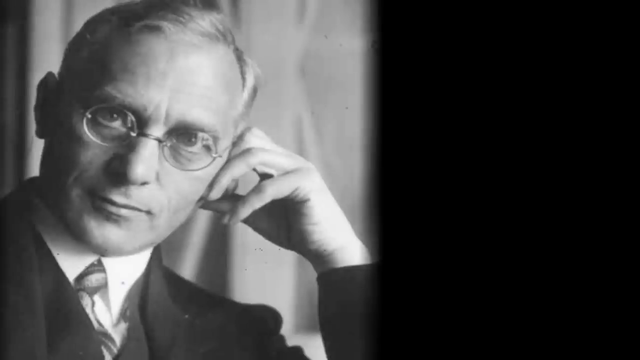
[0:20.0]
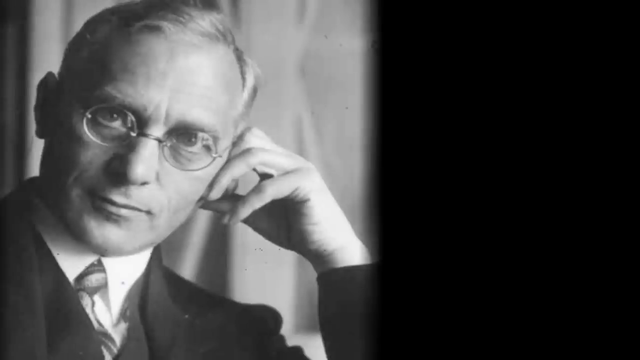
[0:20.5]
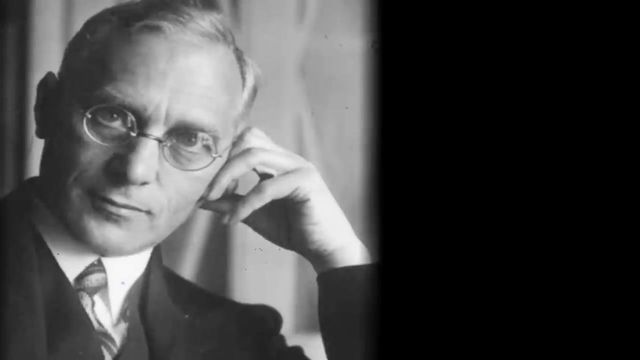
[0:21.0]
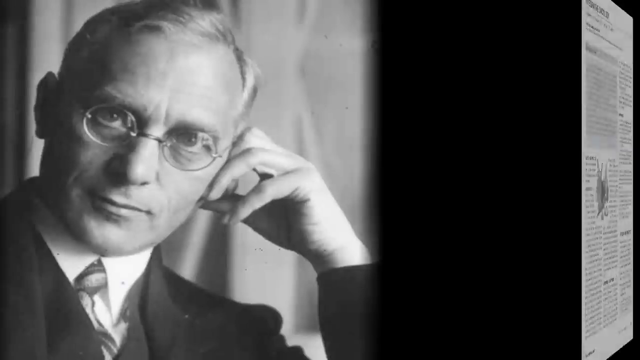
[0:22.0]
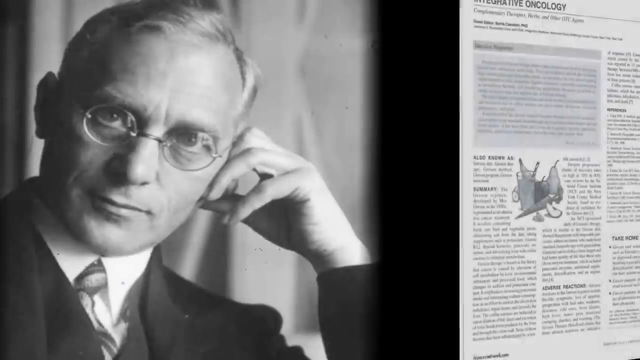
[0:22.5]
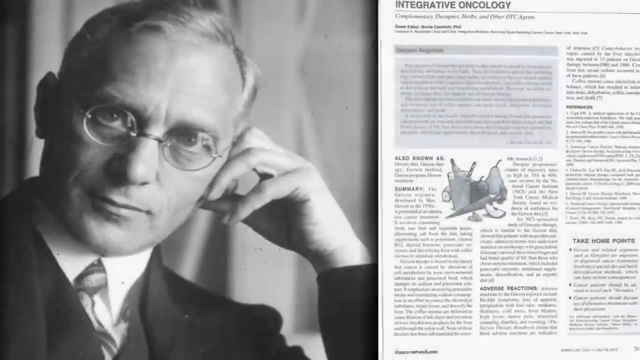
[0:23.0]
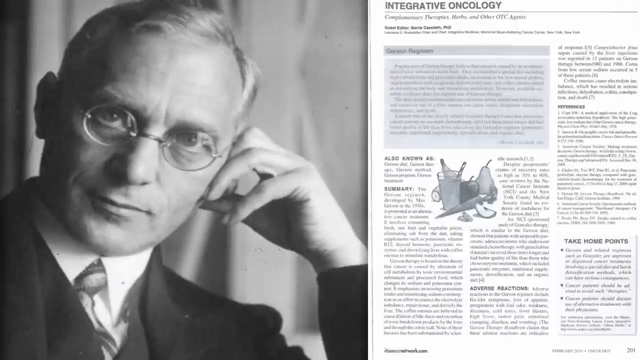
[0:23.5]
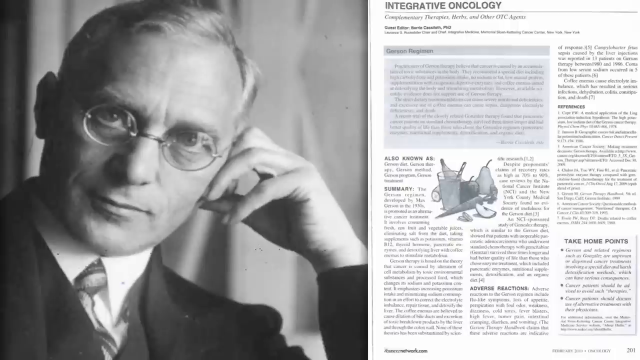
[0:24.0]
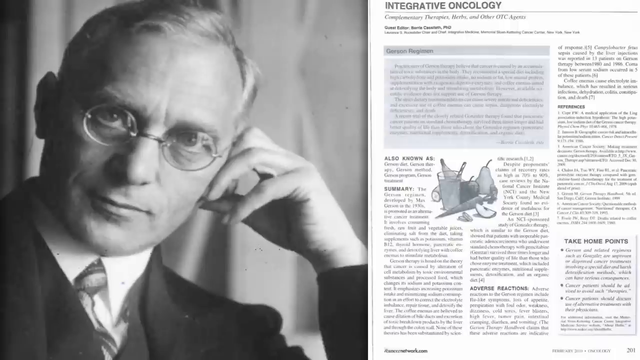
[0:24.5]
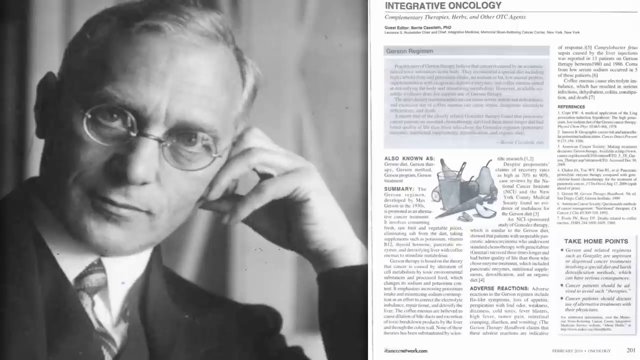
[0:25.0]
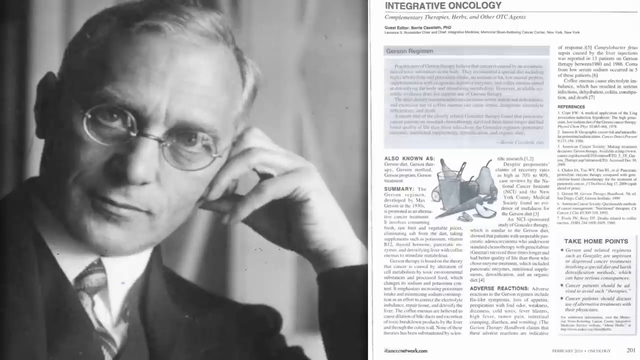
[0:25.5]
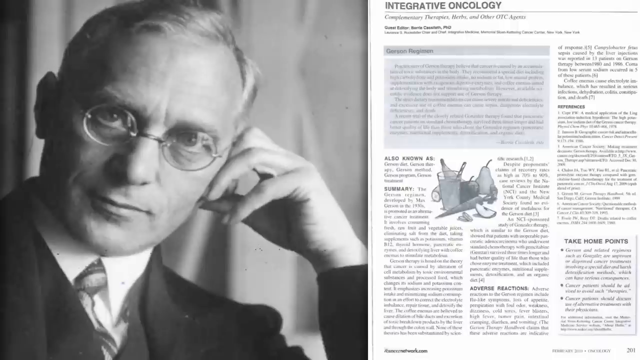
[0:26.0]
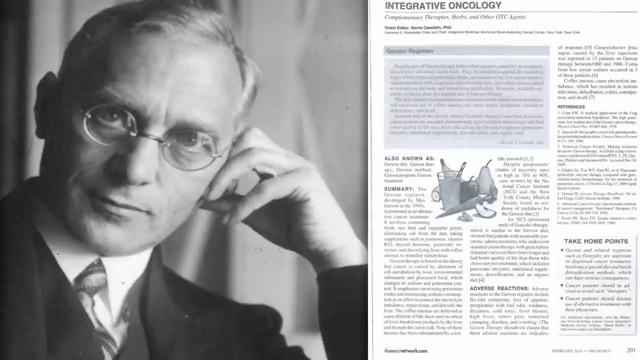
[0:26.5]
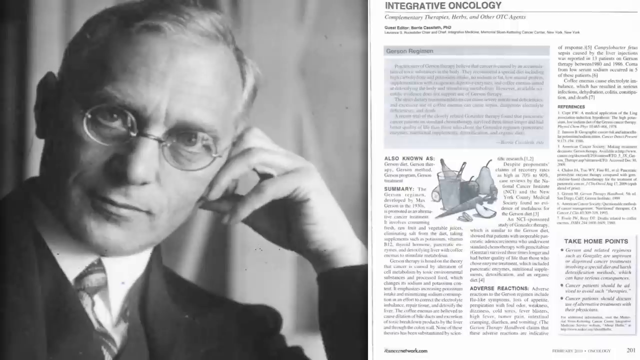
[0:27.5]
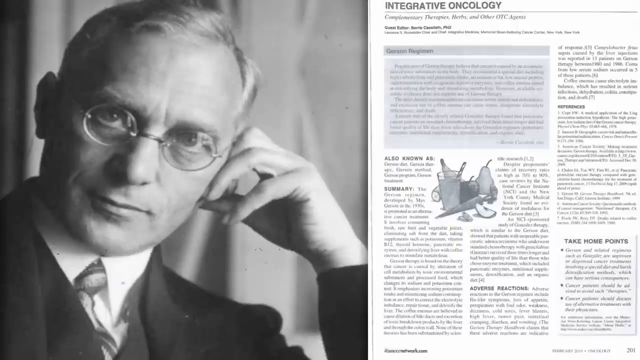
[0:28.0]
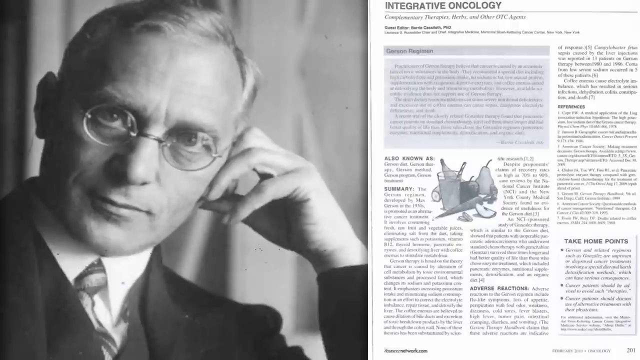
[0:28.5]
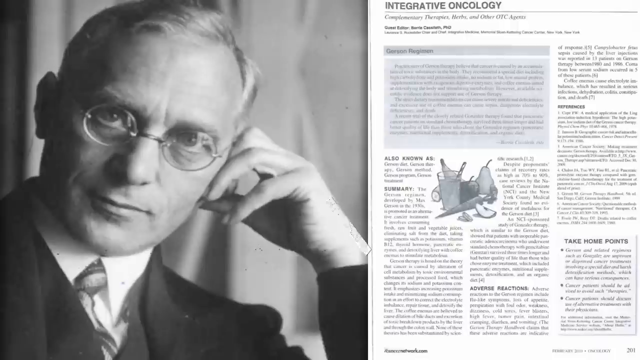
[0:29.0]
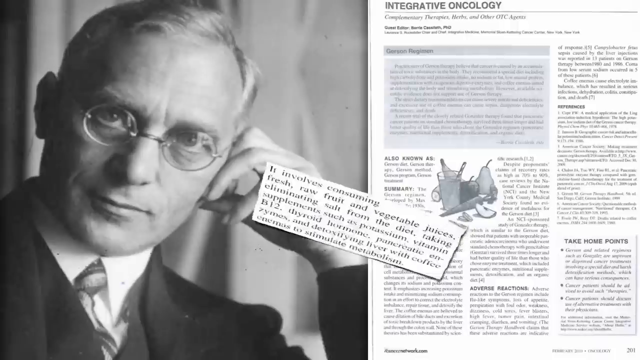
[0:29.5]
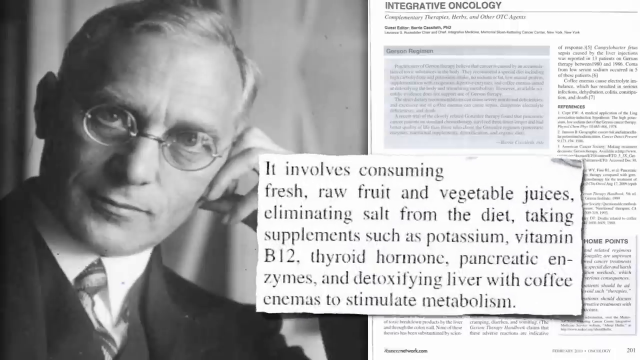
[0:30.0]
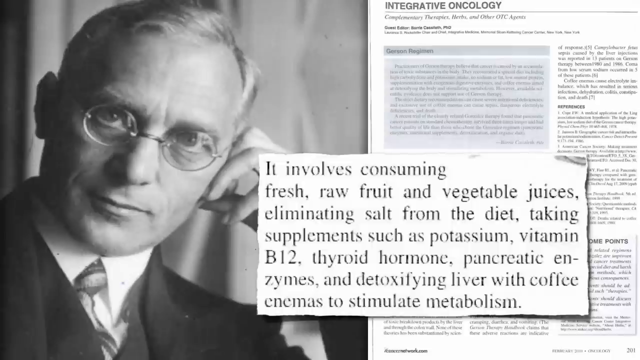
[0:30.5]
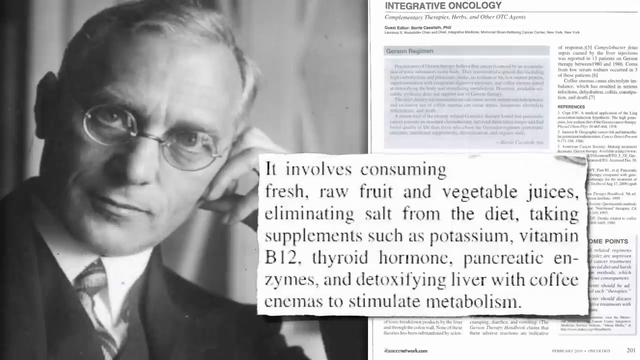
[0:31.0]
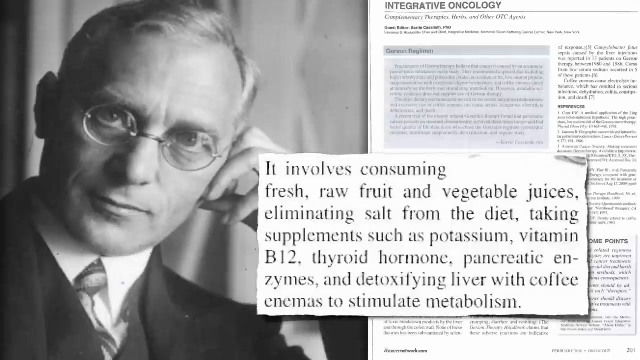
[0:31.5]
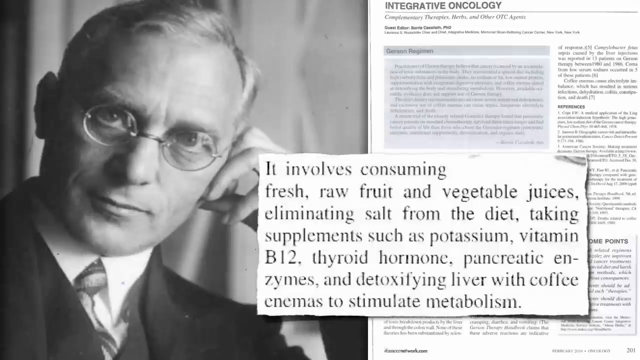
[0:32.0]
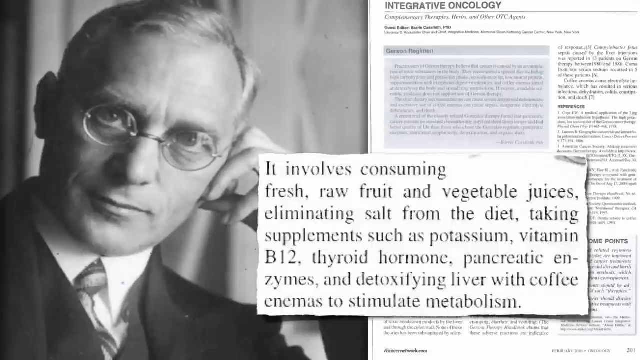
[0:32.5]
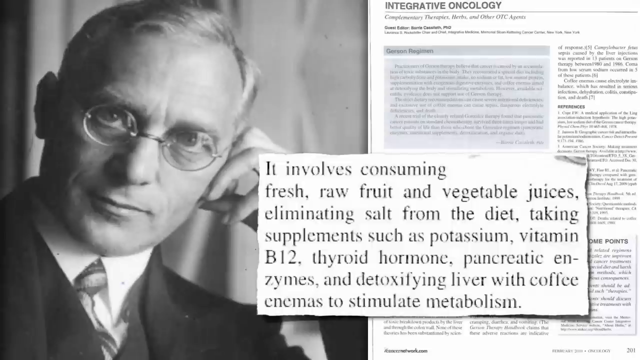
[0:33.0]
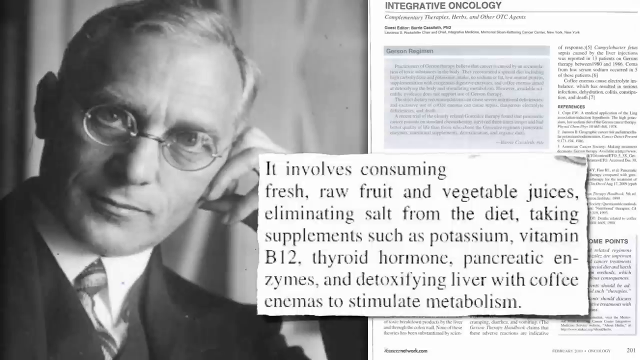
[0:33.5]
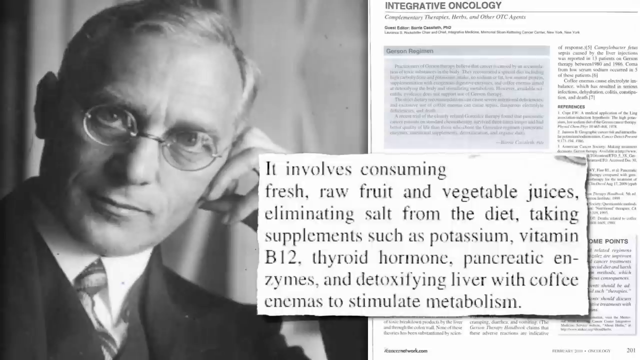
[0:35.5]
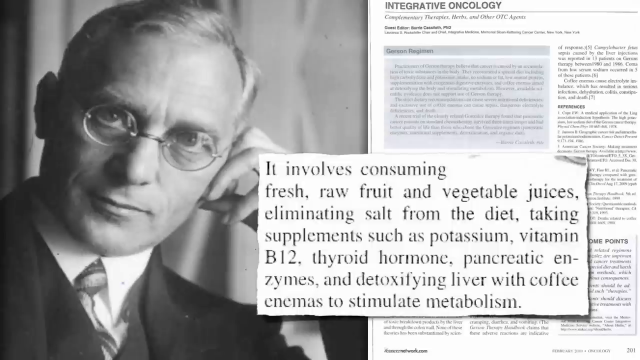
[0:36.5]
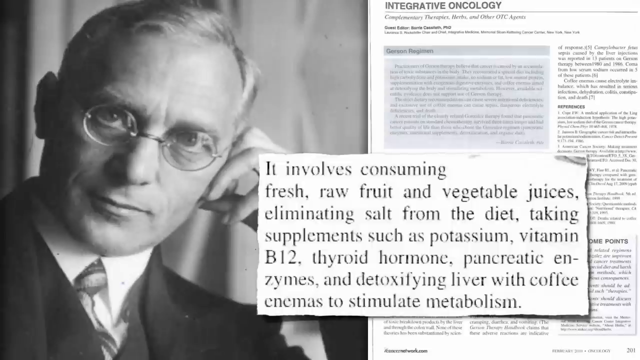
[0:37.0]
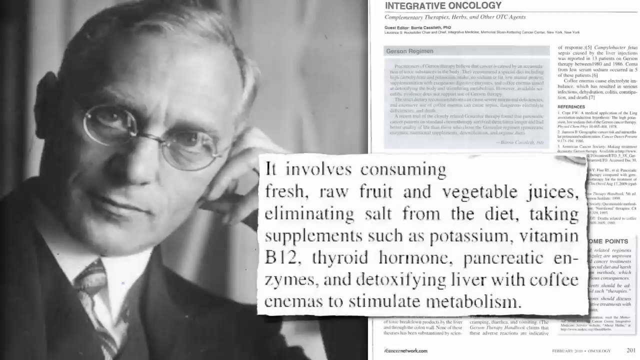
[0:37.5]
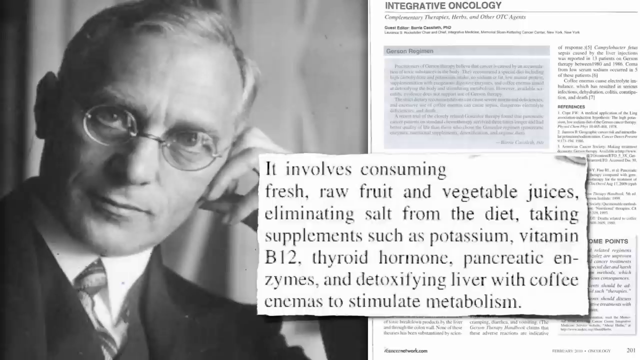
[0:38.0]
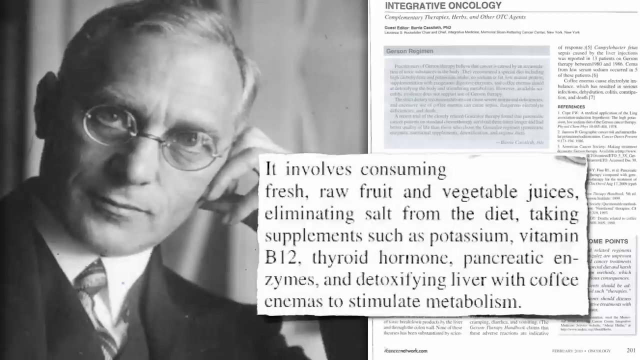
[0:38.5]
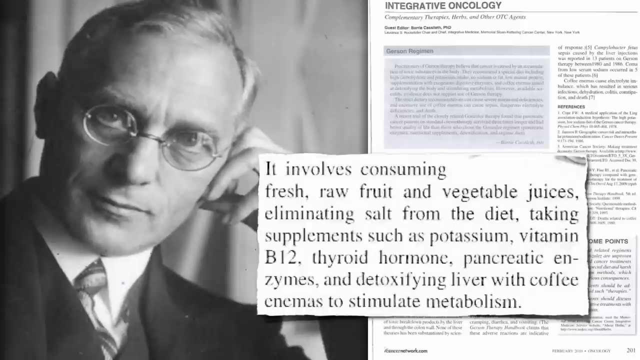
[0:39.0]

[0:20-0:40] A black-and-white picture of a man is on the left side of the screen. He is an older man, in his 50s, maybe early 50s, facing the camera and wearing a suit. His left hand is up to the left side of his ear or head, his fingers curled and touching his head, while his pinky is straight and not touching his head. On the right side of the screen, something that looks like a newspaper appears, with "integrative oncology" at the top. Part of the article then appears on the screen, reading "involved with consuming fresh raw fruits and vegetables, juices, and limiting salt from the diet, taking supplements such as potassium," followed by "vitamin B12, thyroid hormone, pancreatic enzymes in detoxifying liver with coffee." The text is in black letters on a white background.